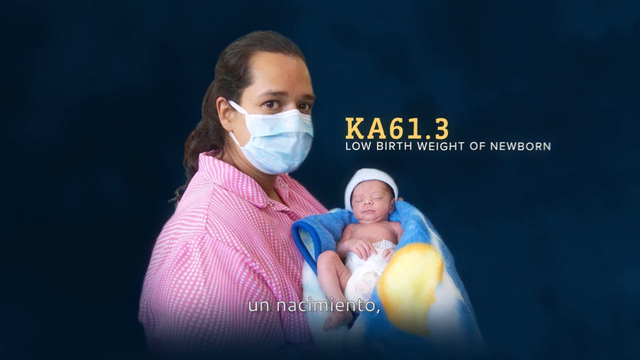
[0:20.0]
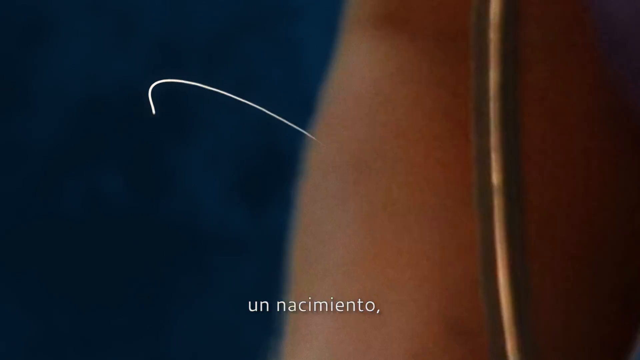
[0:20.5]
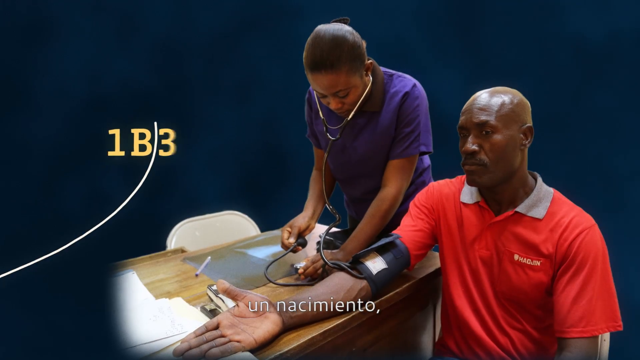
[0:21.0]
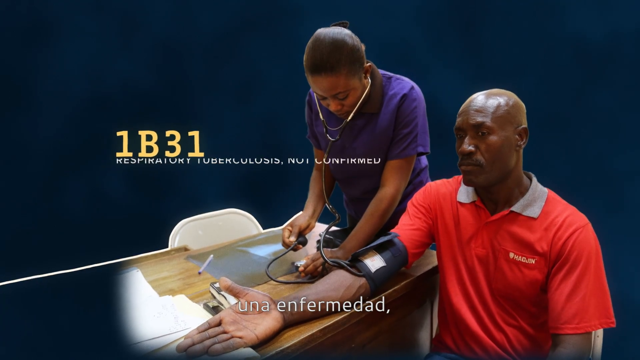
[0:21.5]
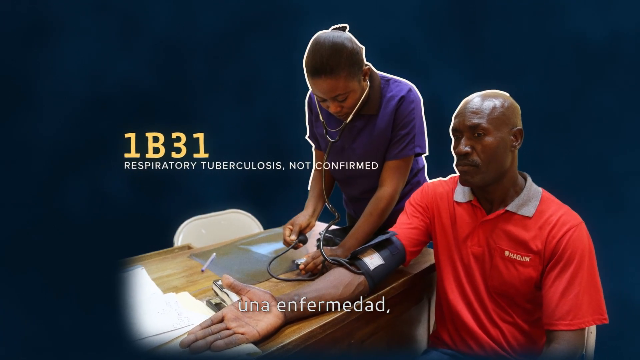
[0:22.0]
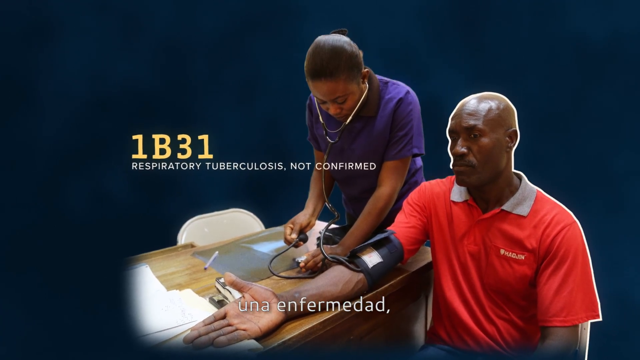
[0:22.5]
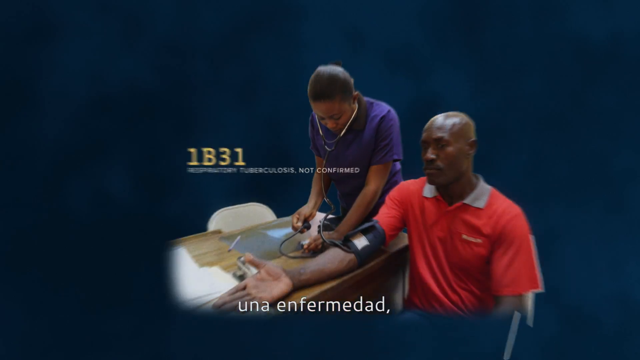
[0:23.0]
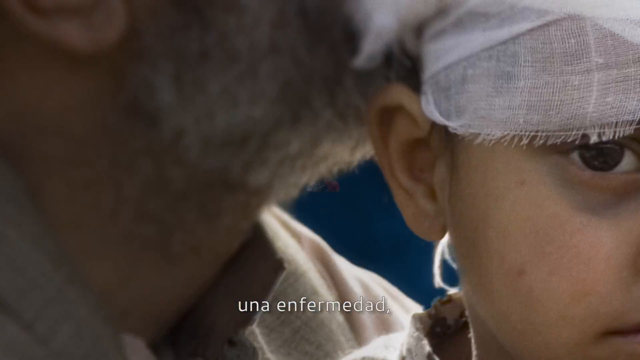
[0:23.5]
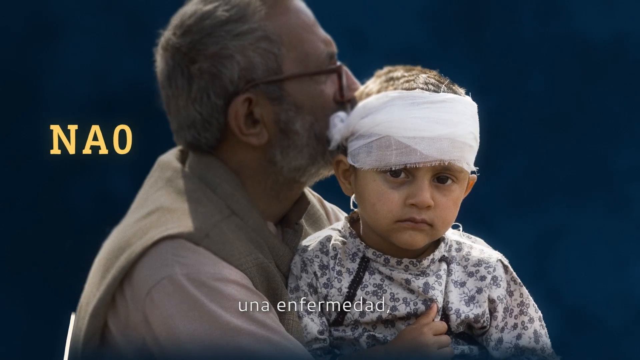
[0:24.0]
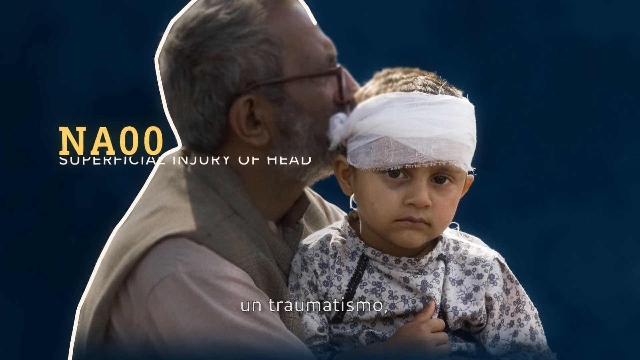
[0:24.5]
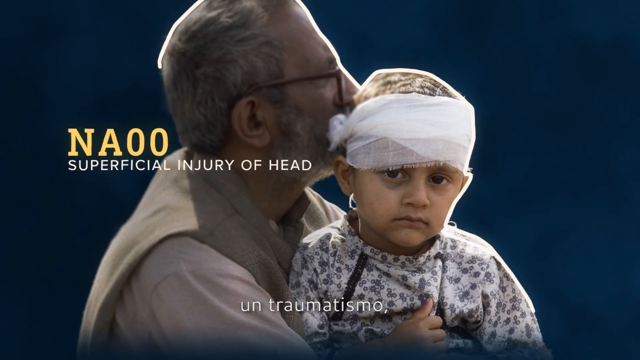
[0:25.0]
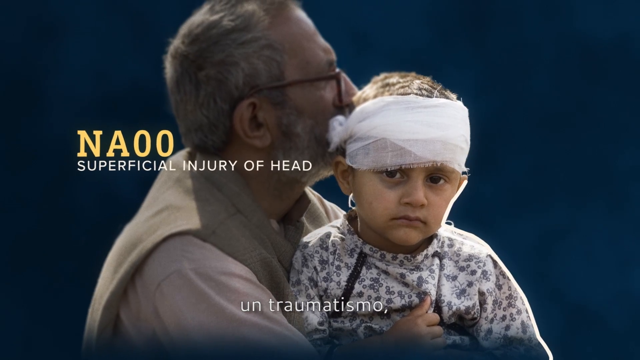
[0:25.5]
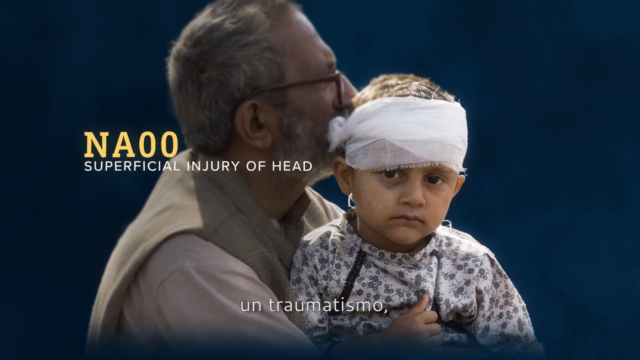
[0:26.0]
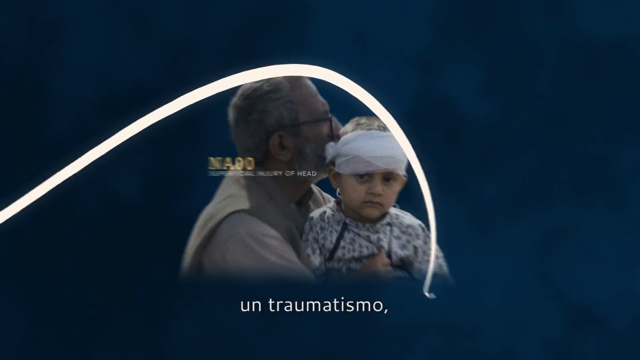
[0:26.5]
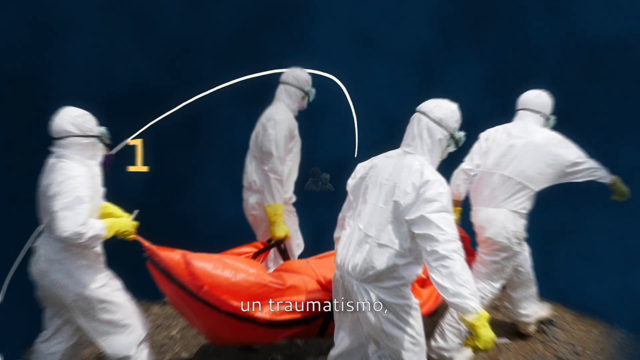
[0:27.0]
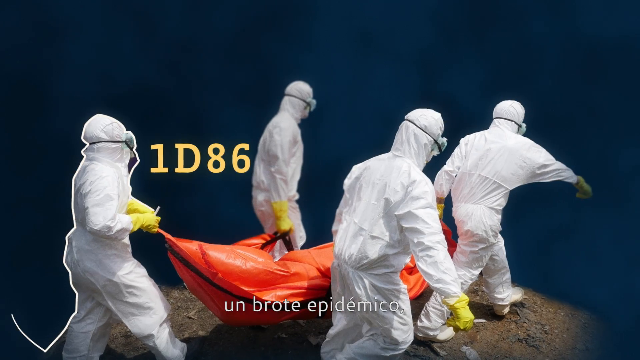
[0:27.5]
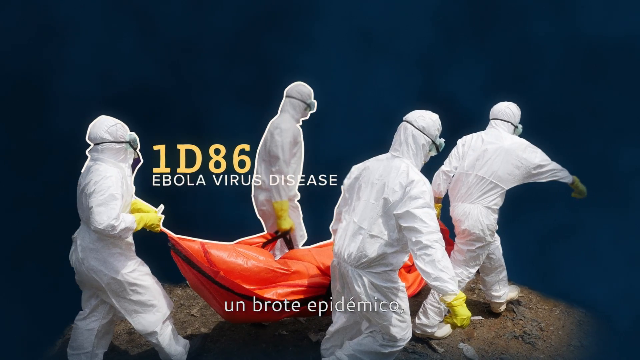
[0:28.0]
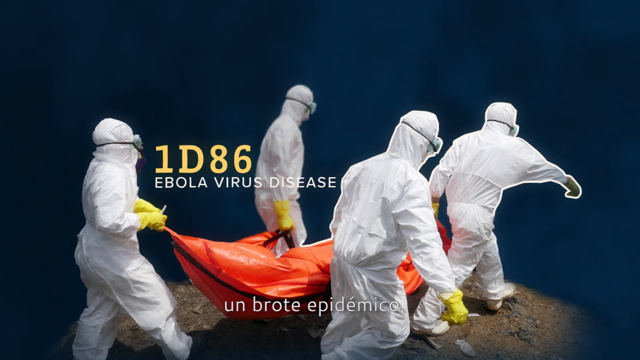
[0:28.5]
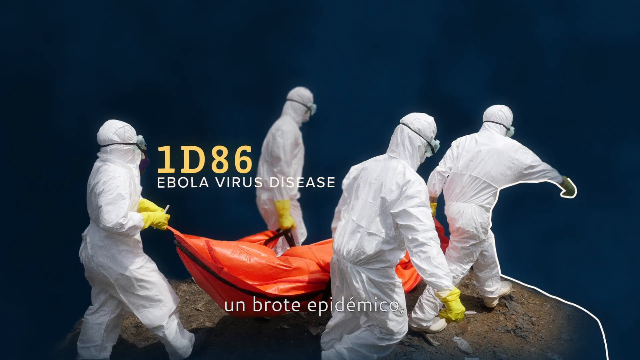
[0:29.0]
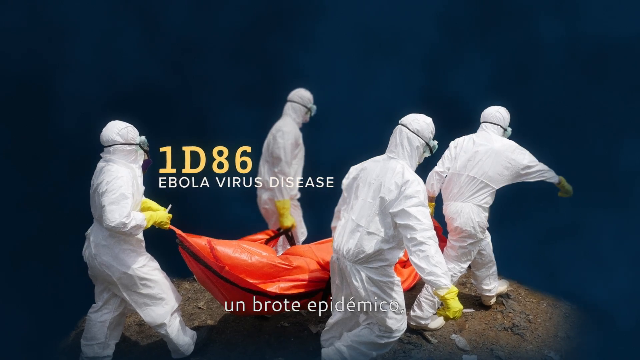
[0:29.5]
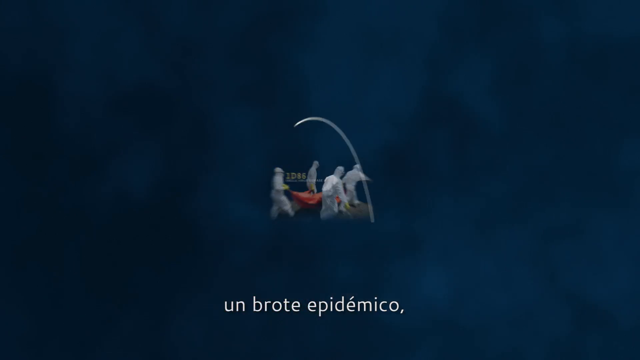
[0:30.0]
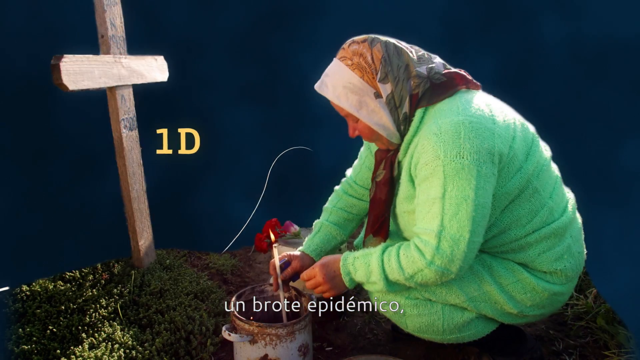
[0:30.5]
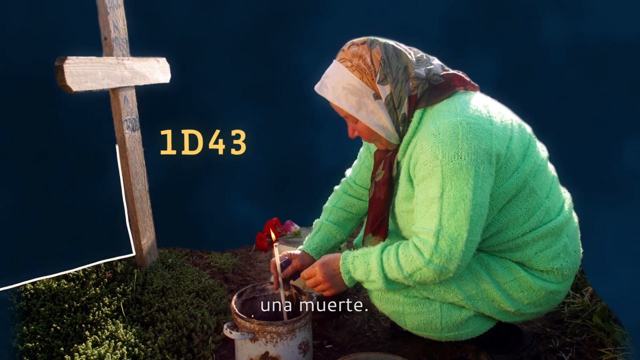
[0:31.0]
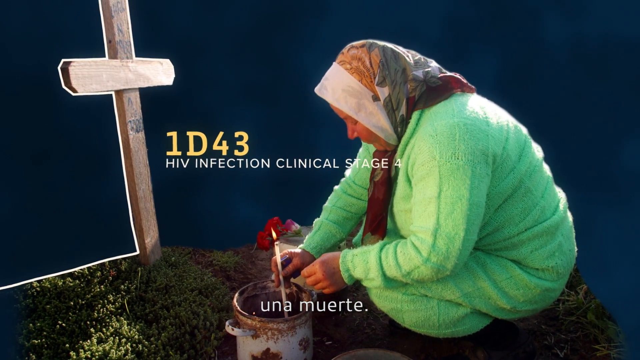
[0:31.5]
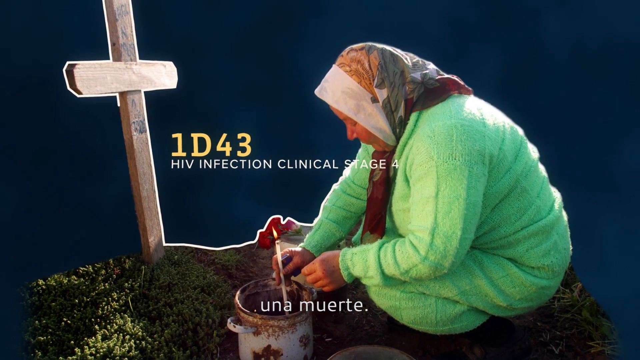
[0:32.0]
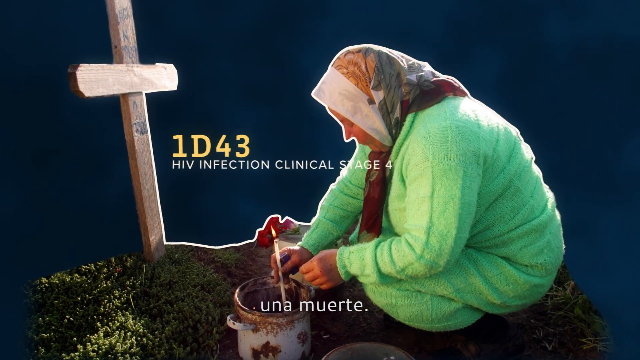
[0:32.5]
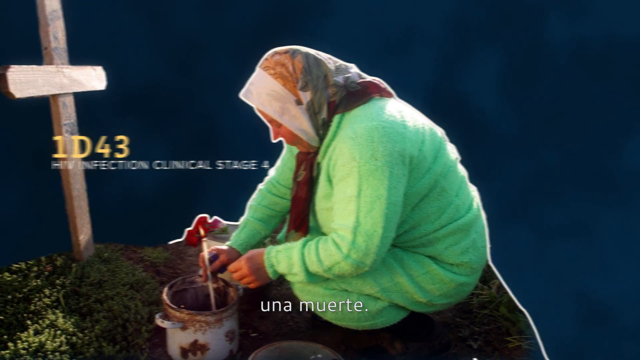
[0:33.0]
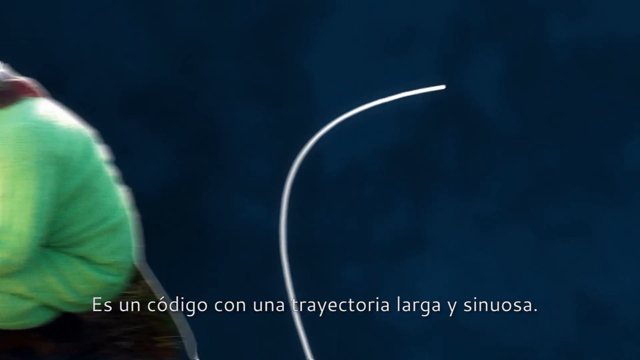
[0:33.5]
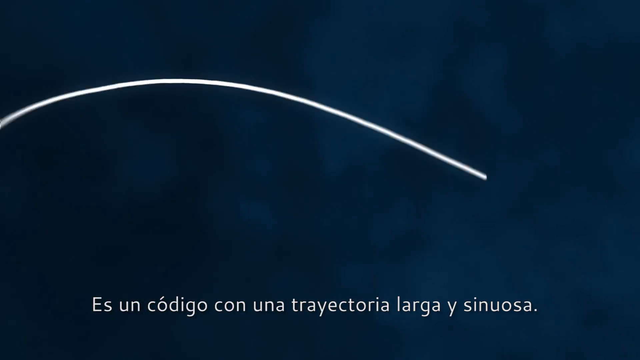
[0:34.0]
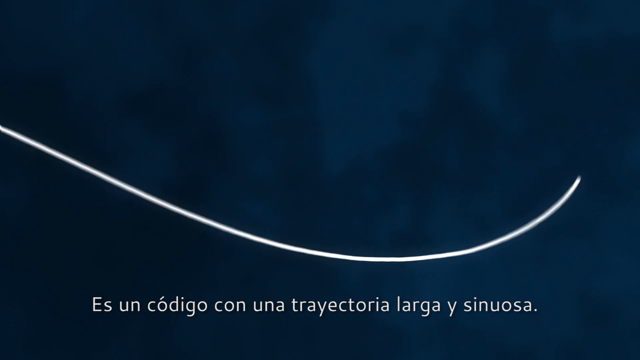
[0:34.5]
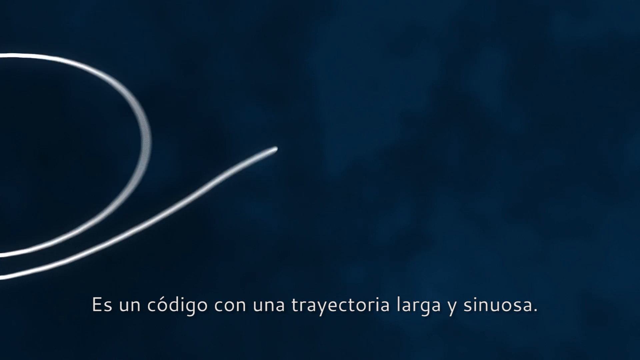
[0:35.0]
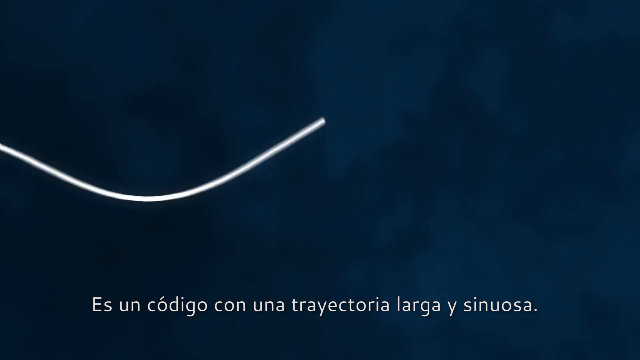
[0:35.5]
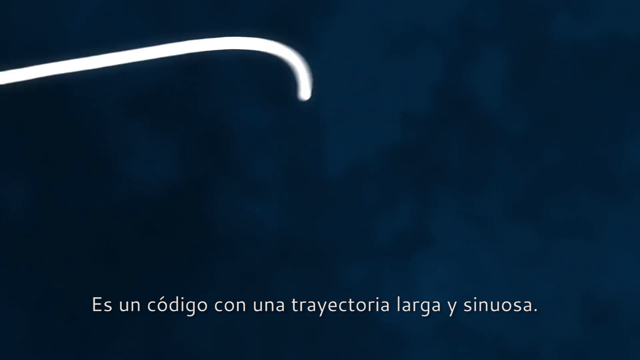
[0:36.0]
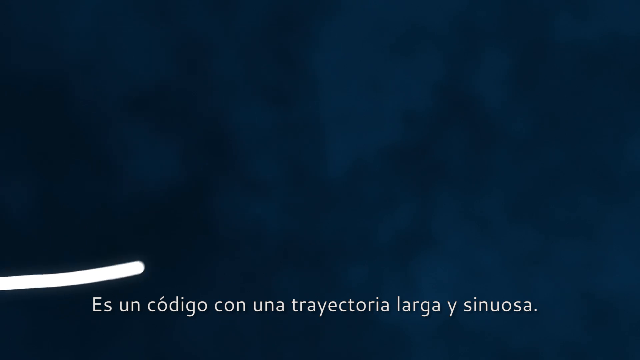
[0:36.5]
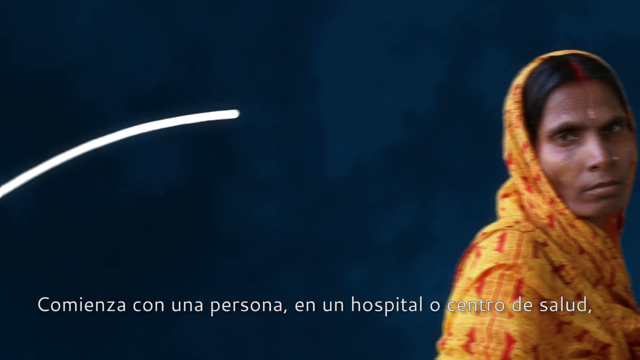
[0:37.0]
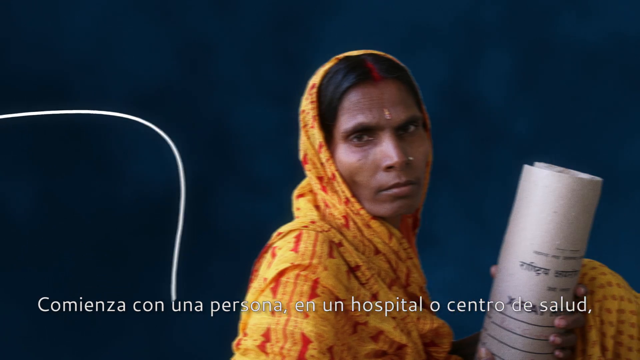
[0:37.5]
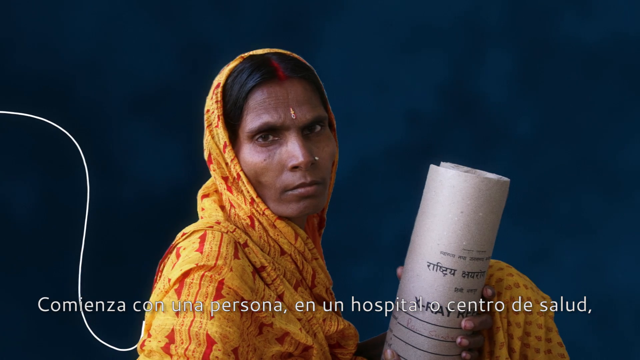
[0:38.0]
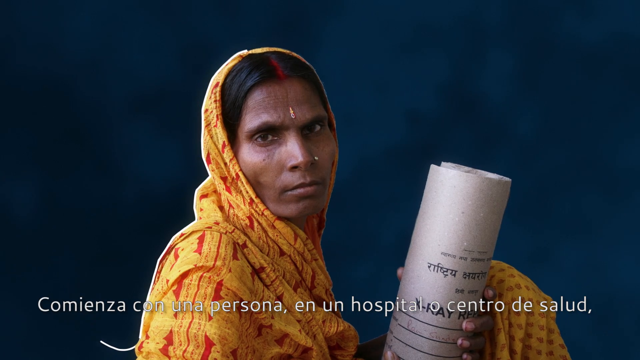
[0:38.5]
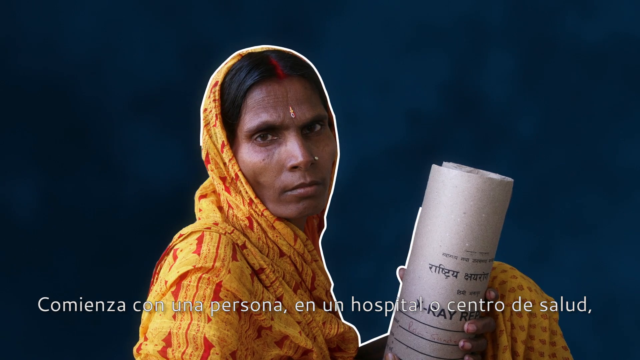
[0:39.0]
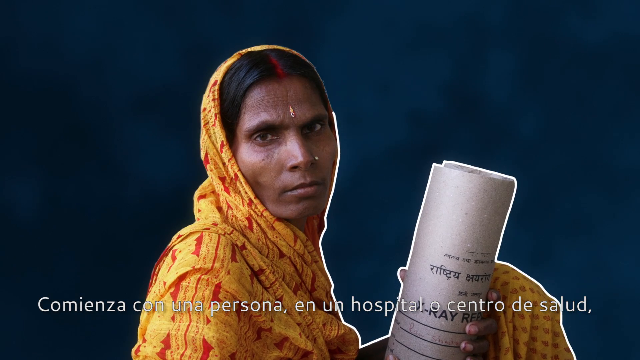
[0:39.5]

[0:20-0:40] Against the dark navy blue, cloudy background, the moving line leads from image to image. It reaches an image of a man in a red polo shirt who is sat down with his right arm laid out in front of him on a table, while a nurse to his right takes his blood pressure, applying a blood pressure monitor. The on-screen text reads "1B31 respiratory tuberculosis not confirmed." The image zooms out to show a man with grey hair holding a young child who has a bandage around their head; the man appears to be kissing the side of the child's head. The text reads "NA00 superficial injury of head." Following the white line, a new image shows four people in full head-to-toe hazmat suits with yellow gloves and goggles, apparently carrying two bright orange body bags, with the text "1D86 Ebola virus disease." Next, a woman in a headscarf and a green dress appears to be sat at someone's grave, where there is a cross on a mound; the text reads "1D43 HIV infection clinical stage 4." The white line then leads all the way to a new image of a woman in a yellow headscarf carrying what looks like a scroll in her hand.